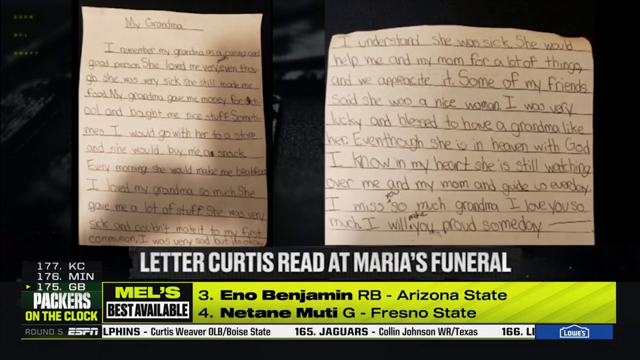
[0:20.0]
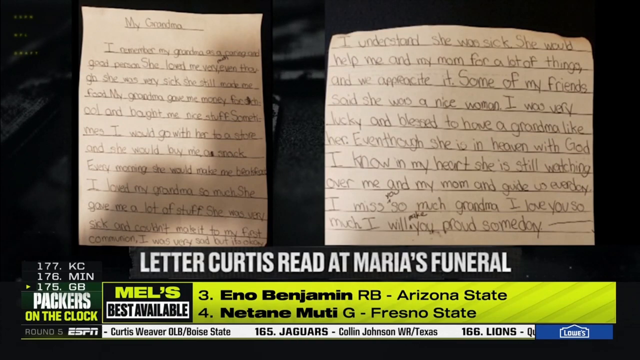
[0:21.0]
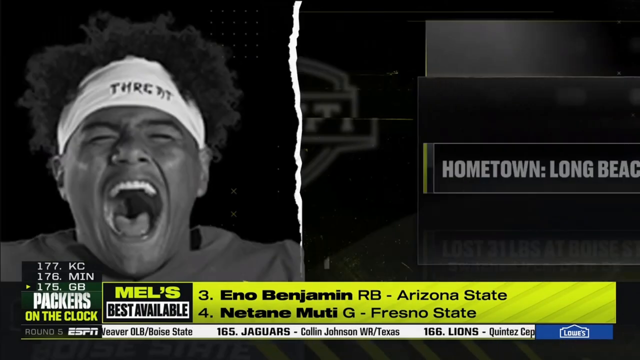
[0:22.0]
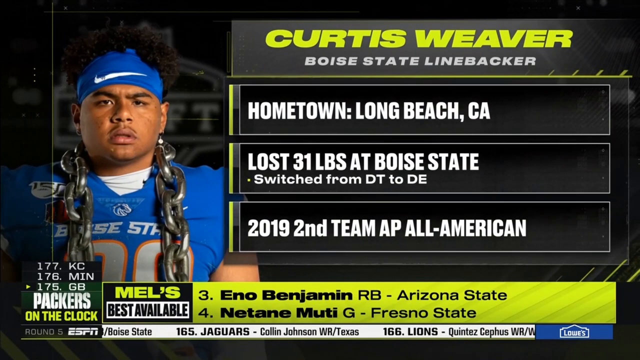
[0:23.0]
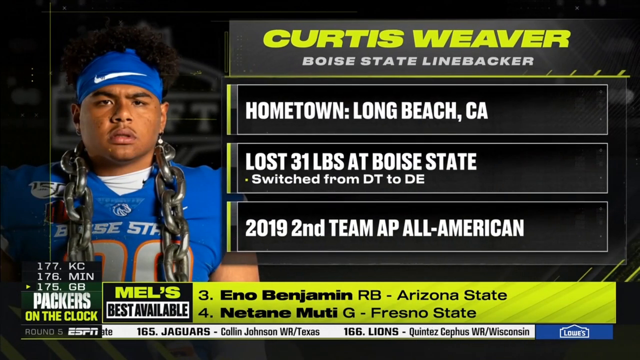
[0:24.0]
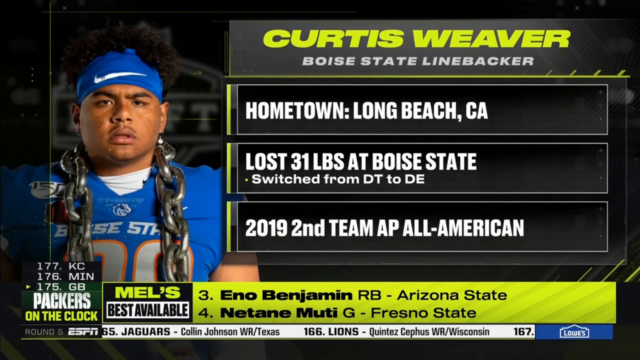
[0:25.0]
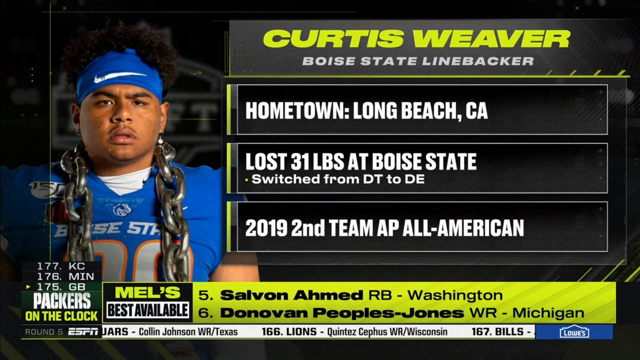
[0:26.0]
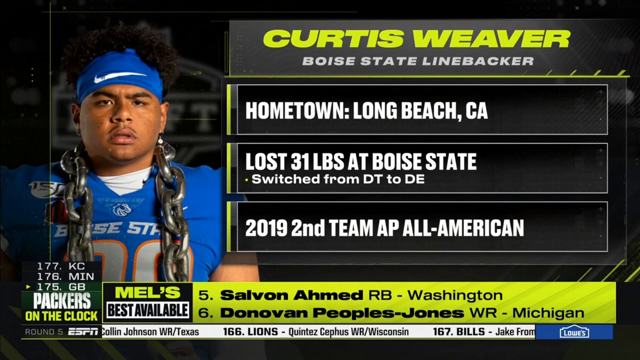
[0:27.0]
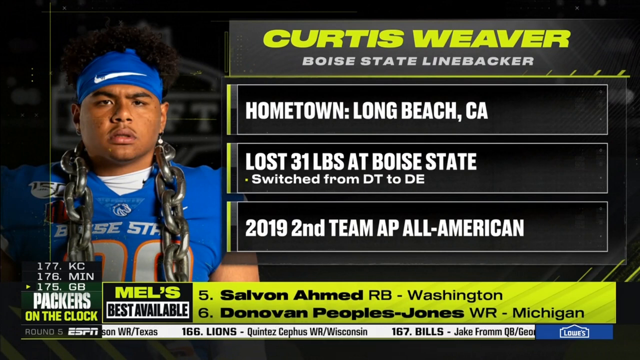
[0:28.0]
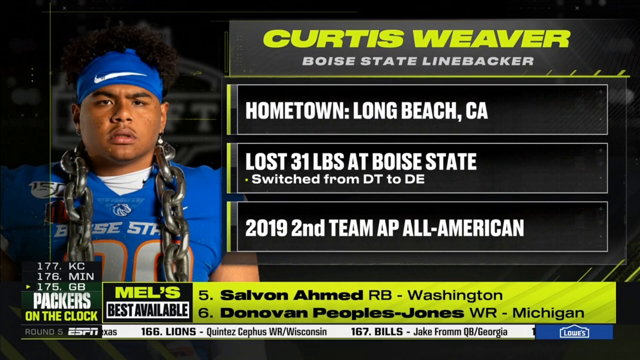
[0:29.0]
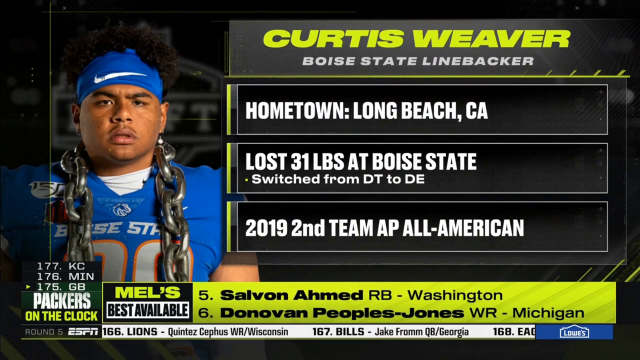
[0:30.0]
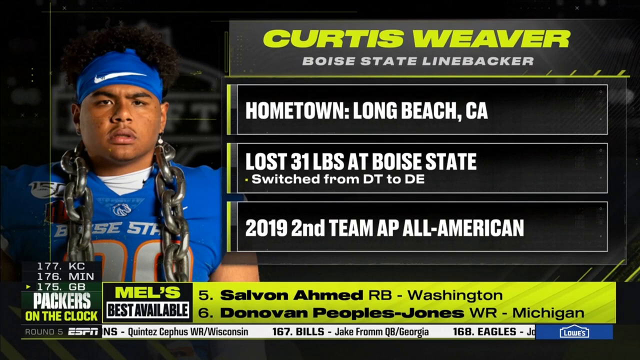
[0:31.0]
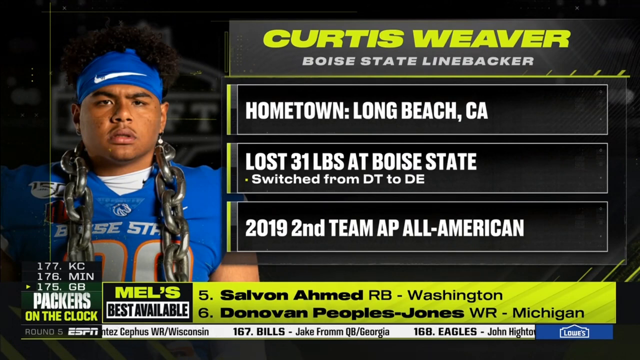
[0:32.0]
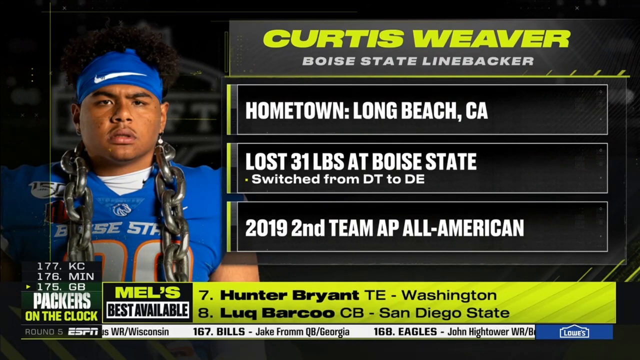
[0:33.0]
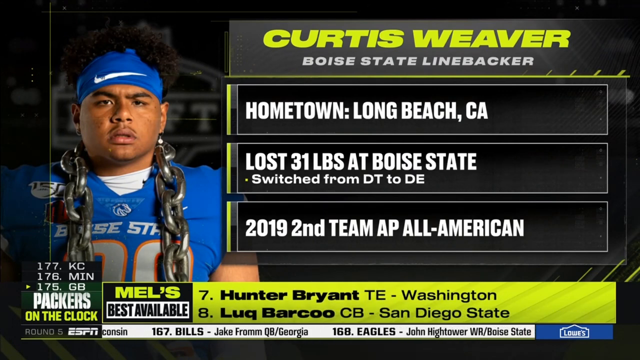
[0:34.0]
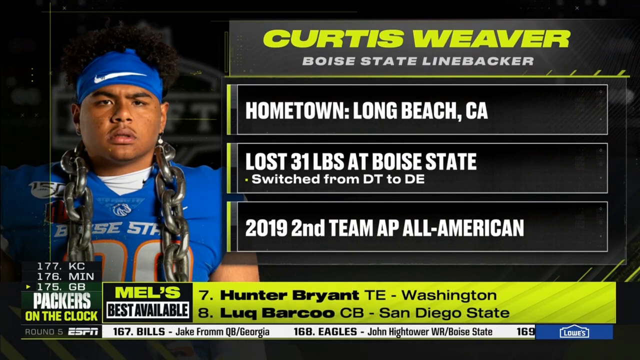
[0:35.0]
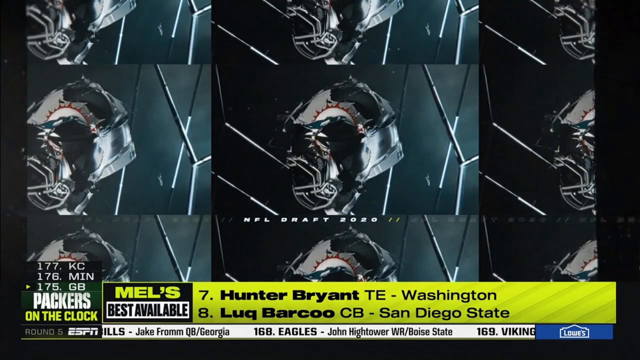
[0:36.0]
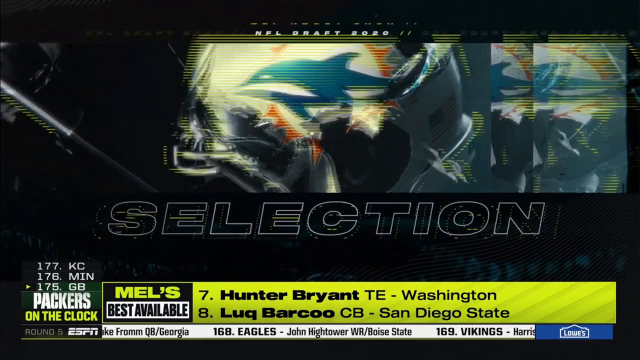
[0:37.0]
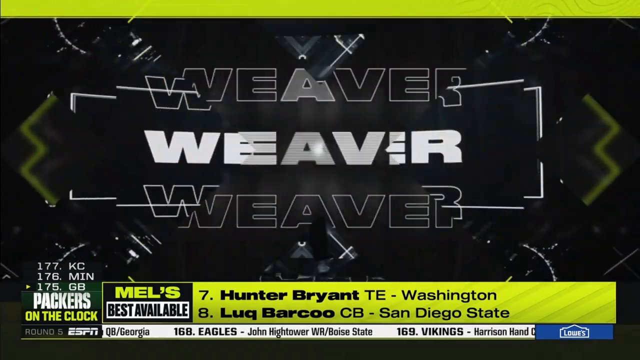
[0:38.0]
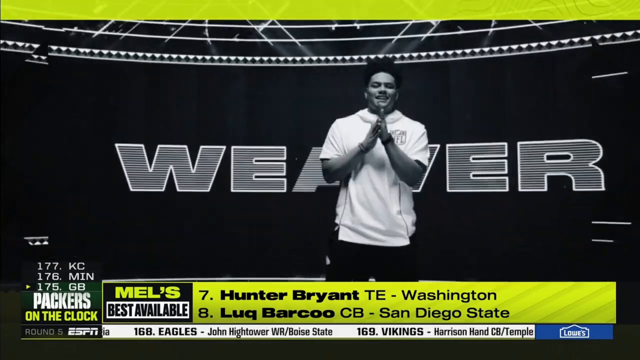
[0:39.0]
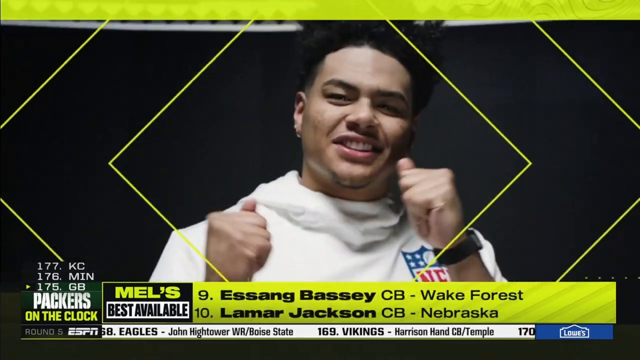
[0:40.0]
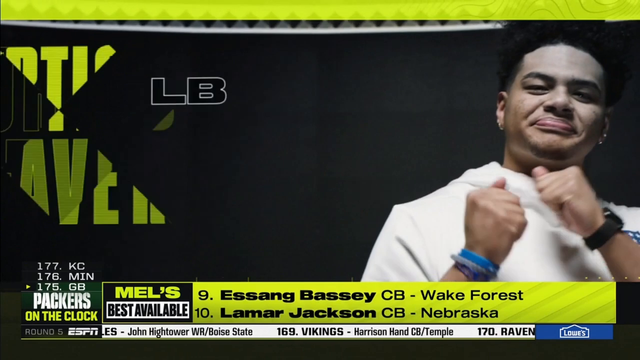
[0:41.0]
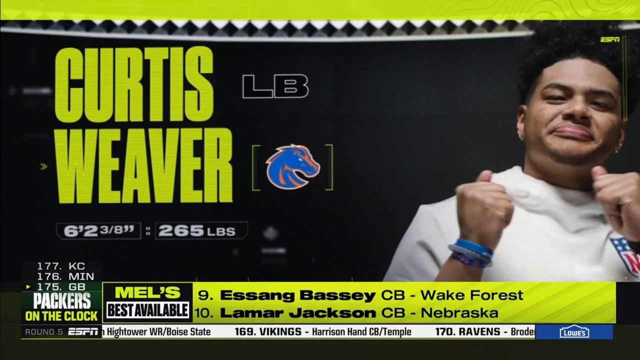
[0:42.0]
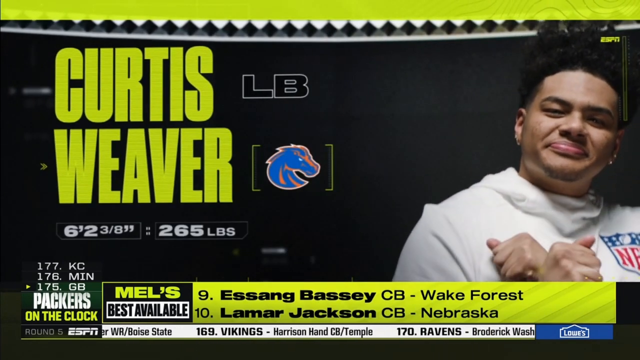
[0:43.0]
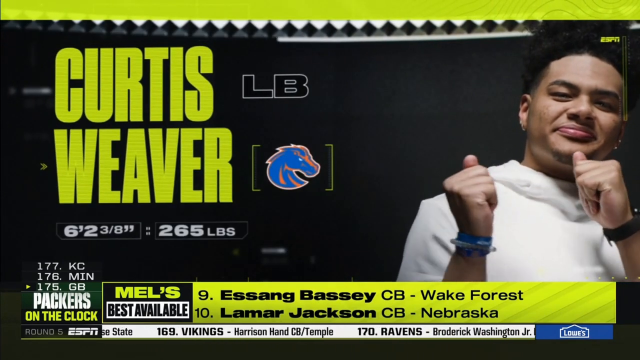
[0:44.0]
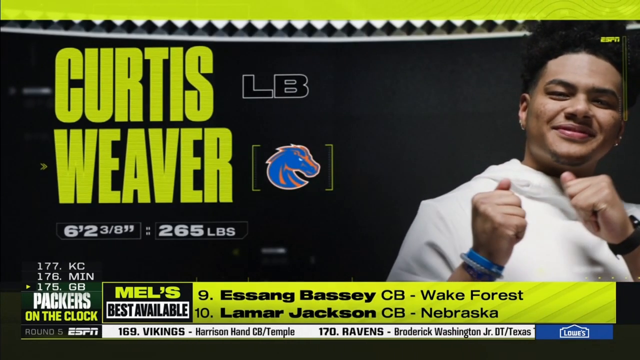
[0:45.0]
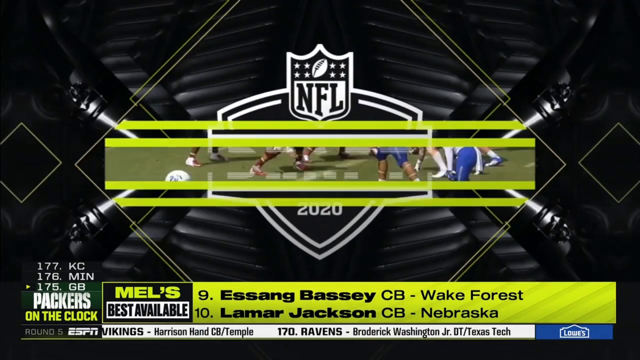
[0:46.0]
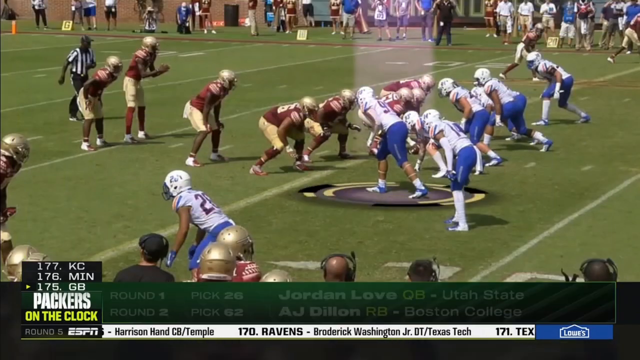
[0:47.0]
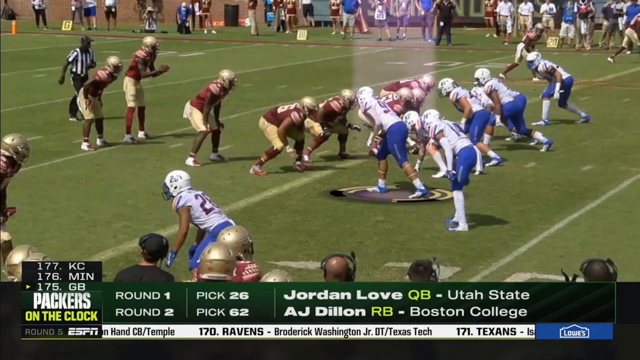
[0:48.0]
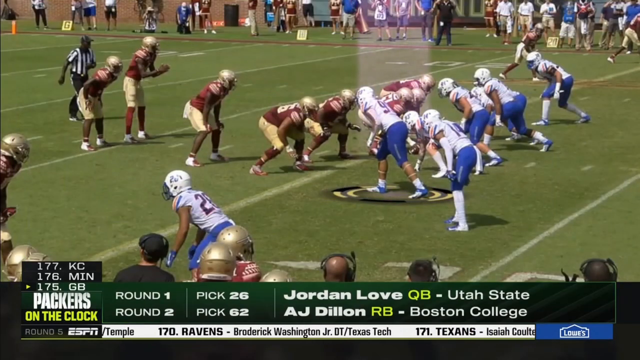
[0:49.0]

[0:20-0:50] The 2020 NFL draft logo appears, a blue logo with white text. Curtis Weaver then appears with a chain around his neck and a blue Nike headband, staring at the camera. On-screen text reads "hometown Long Beach CA", "lost 31 pounds at Boys State", "switch from DT to DE", "2019, second team AP All-American" and "Boys State linebacker". After a transition, yellow text on the screen reads "Dolphins", followed by an animated Dolphins logo, and then text reading "Weaver". Weaver, wearing a white NFL top, rubs his hands together as the camera zooms in on his face while he celebrates. A caption reads "Weaver, LB, 6 foot 2, 265 pounds". Next comes an image of a player in white with blue trousers on a field with football players in red and gold; his teammates wear blue and white. He is highlighted with a circle around him, at the forefront in the center of the image, with the ball in his hand.